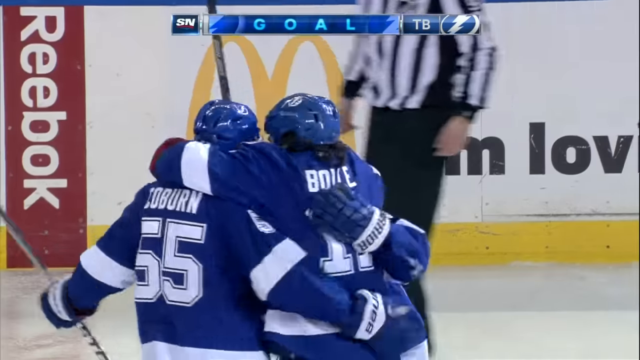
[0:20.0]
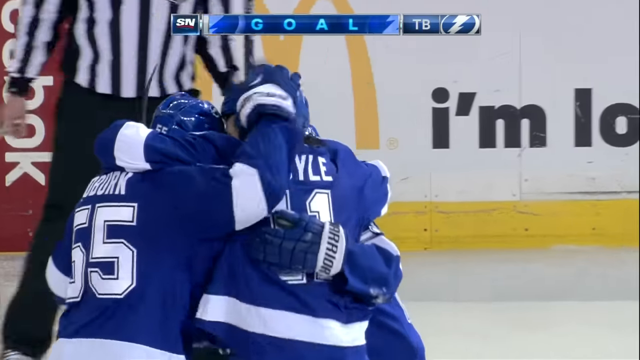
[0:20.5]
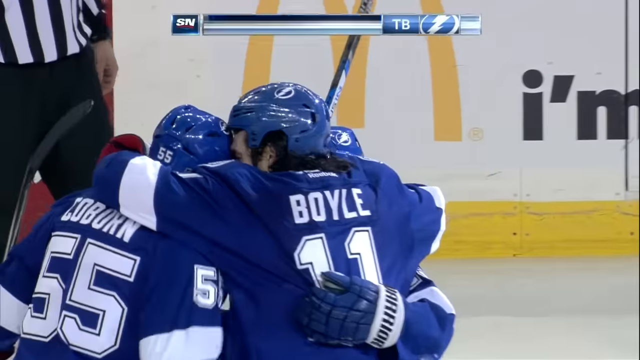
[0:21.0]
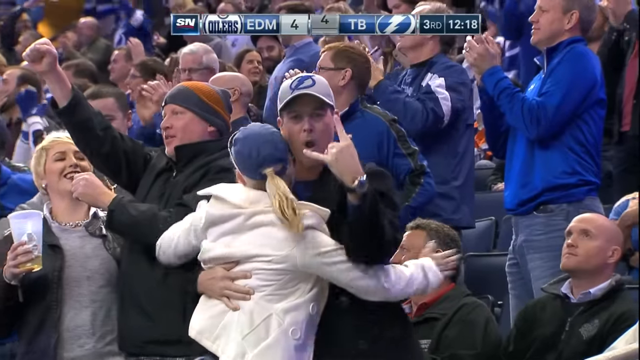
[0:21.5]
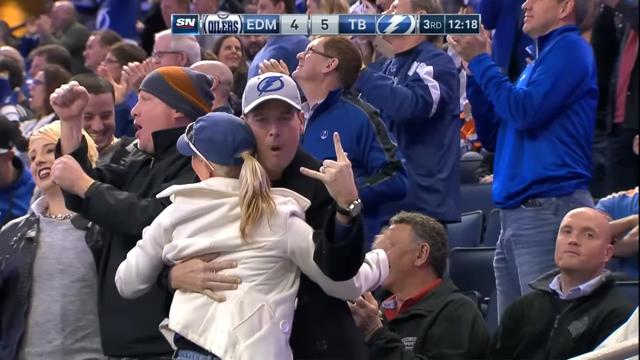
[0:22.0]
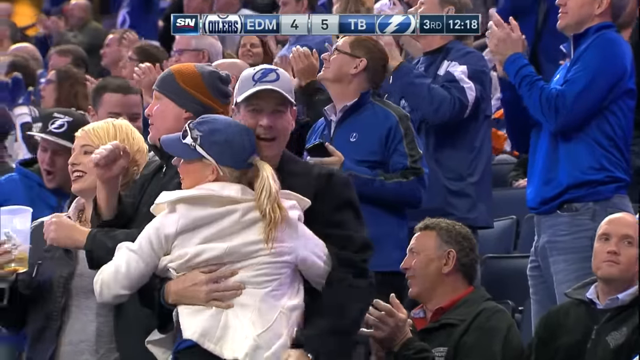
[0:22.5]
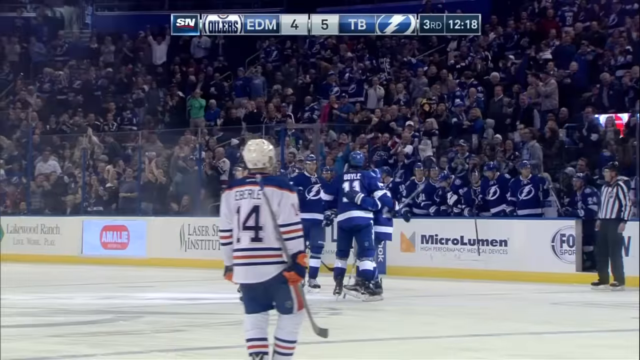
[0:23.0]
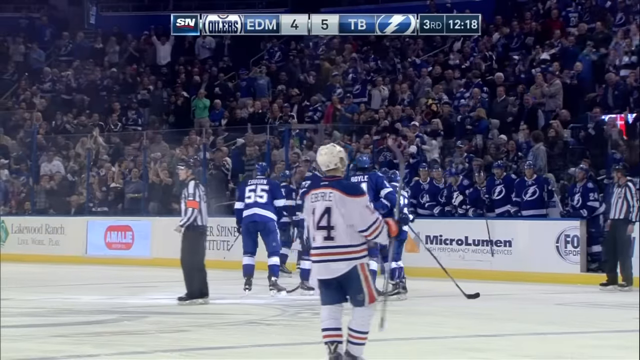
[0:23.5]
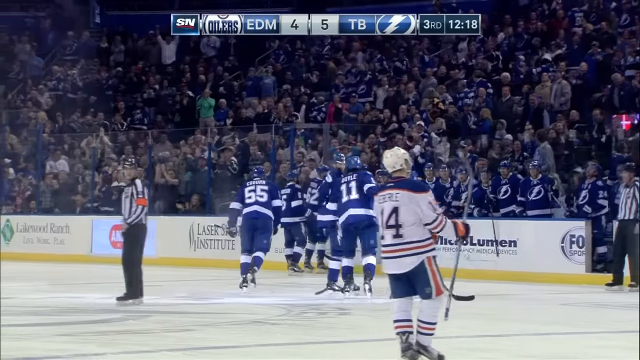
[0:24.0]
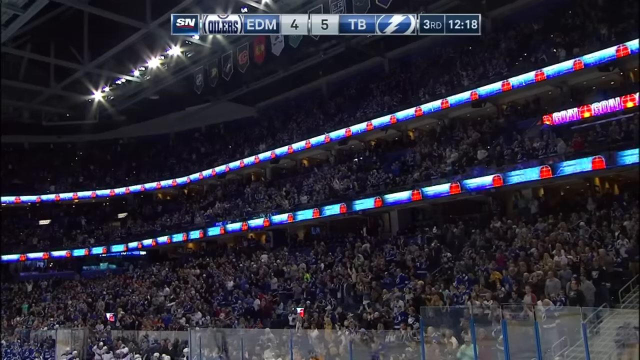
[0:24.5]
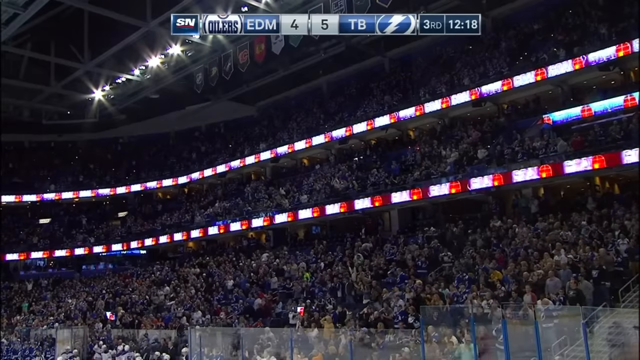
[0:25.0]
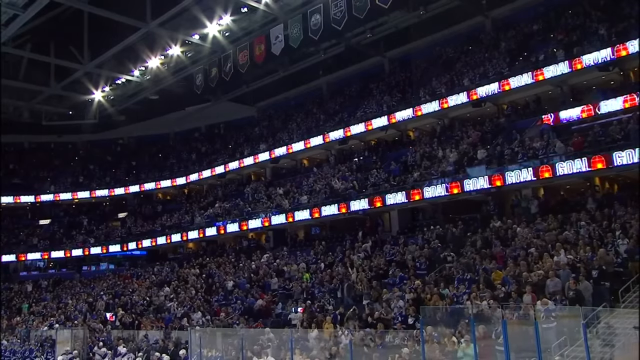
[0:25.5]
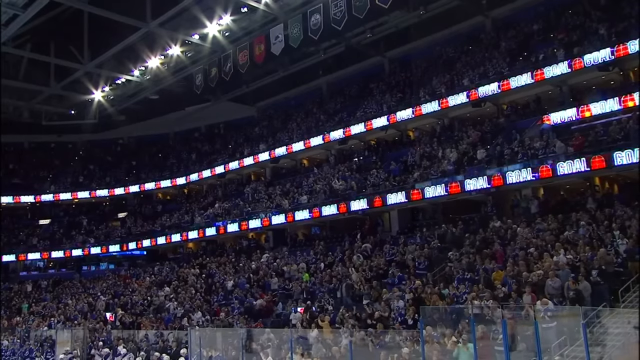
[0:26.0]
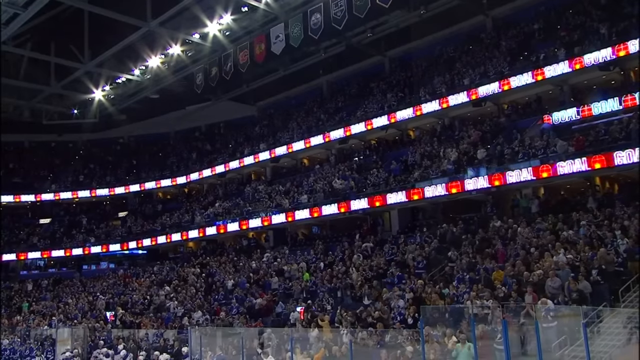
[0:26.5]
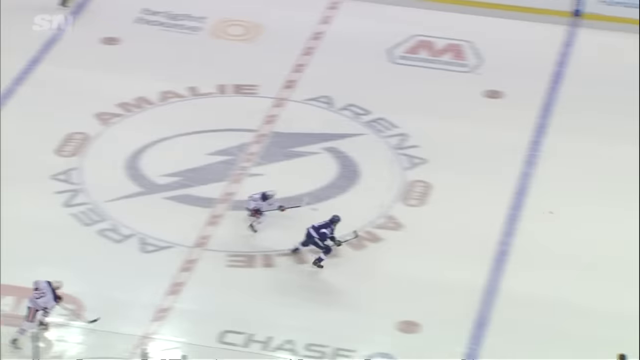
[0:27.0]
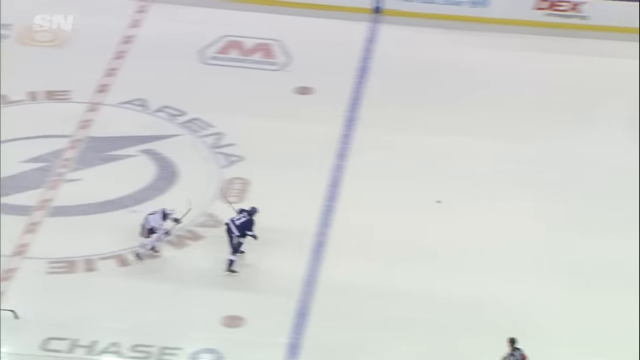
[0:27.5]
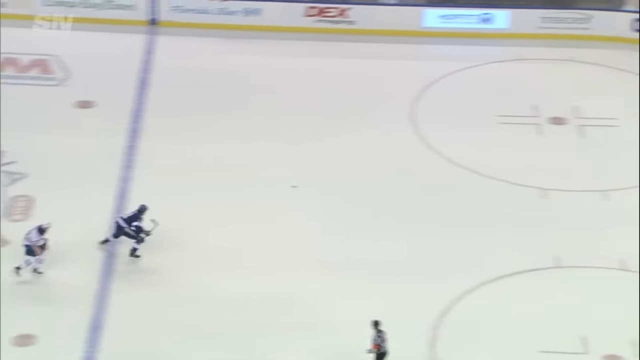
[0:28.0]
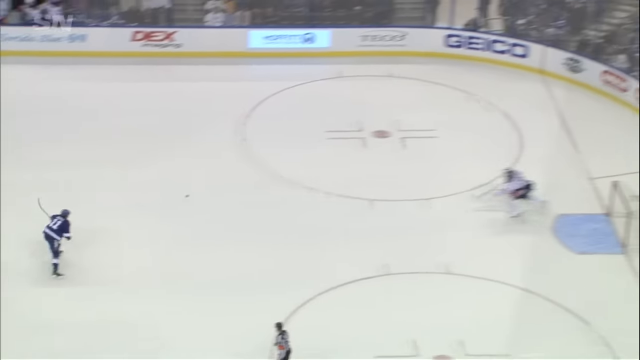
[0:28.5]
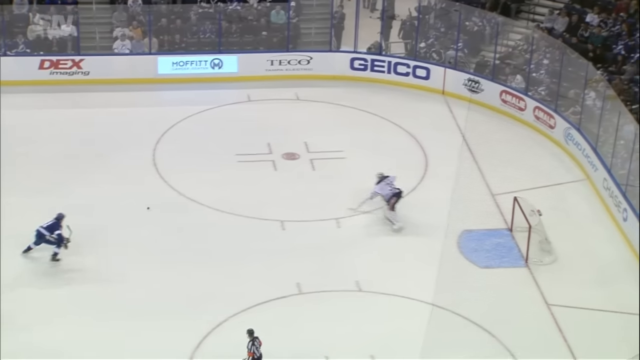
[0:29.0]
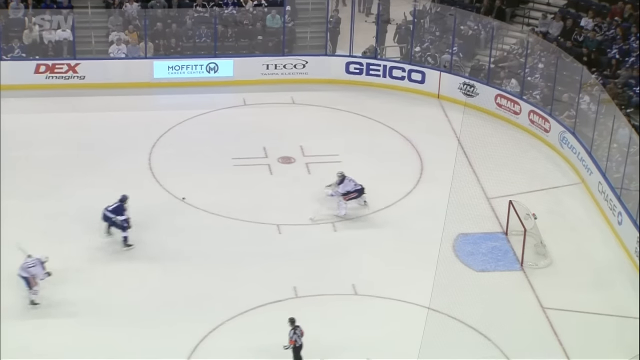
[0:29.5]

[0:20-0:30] After the goal, hockey players hug. Two arms are visible around each other on the backs of two players, and there looks like there could be another arm on the right-hand side. The referee is in front of them, and it looks like there are three players. The angle changes to show a family: a white man holds his left hand up and hugs a person, maybe his wife. Down below, the team has gathered together, and there are a lot of lights in the stands from the fans and the screens.